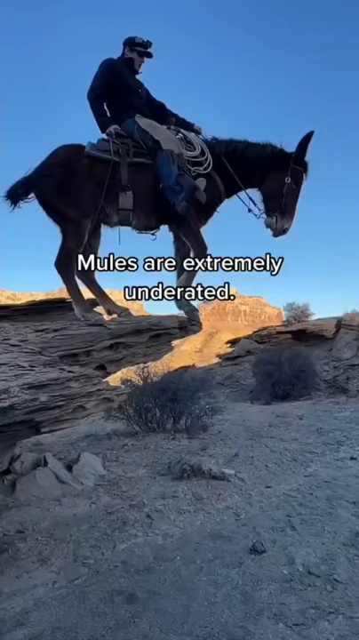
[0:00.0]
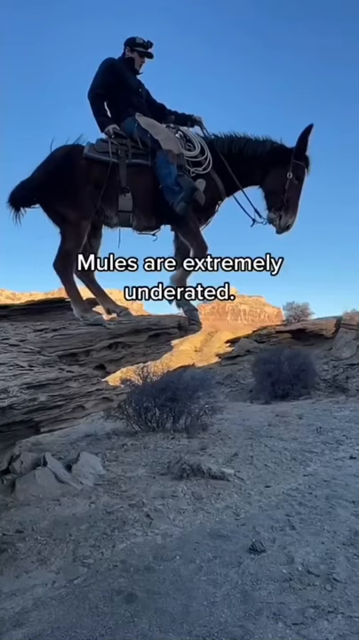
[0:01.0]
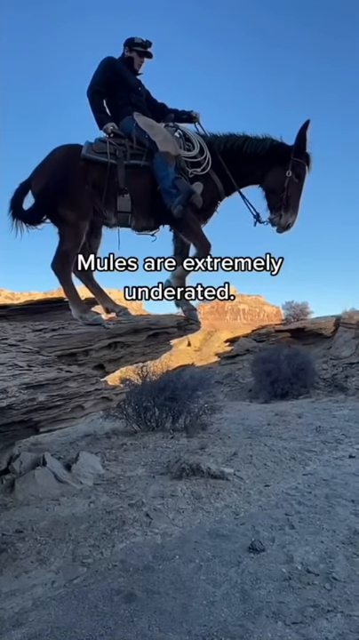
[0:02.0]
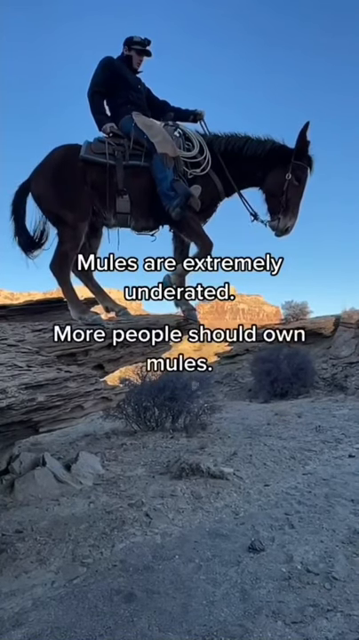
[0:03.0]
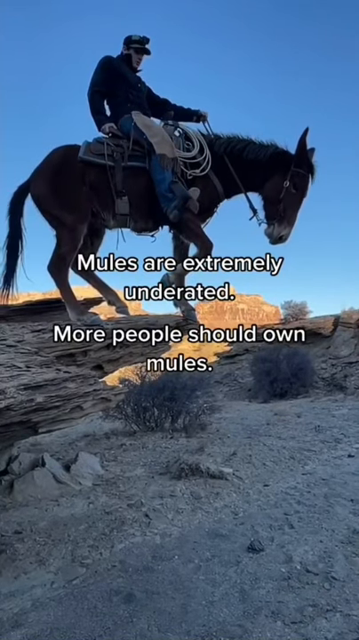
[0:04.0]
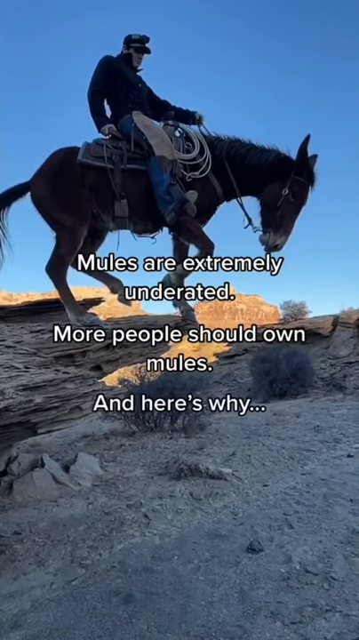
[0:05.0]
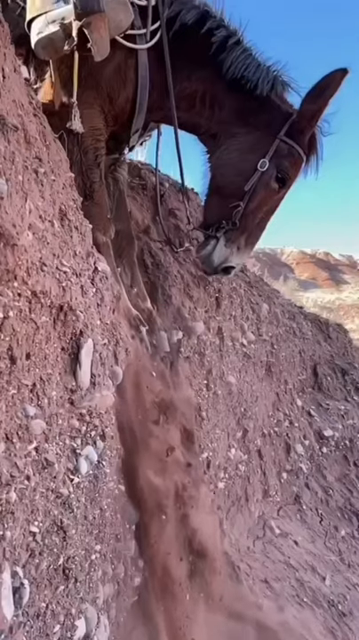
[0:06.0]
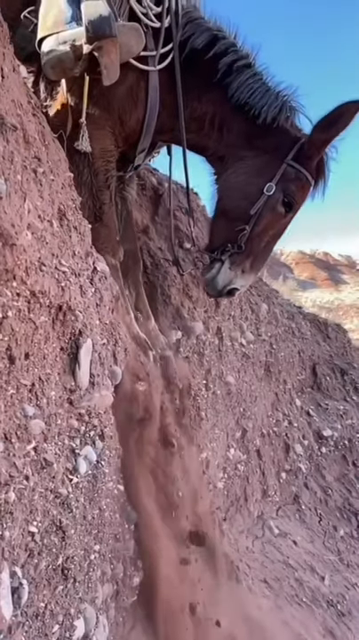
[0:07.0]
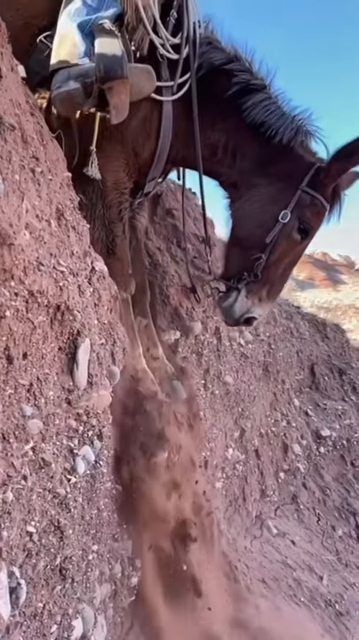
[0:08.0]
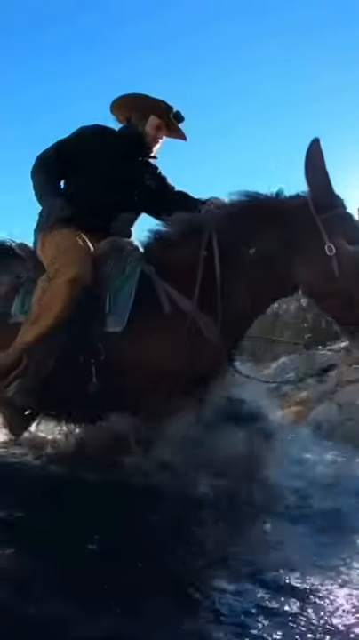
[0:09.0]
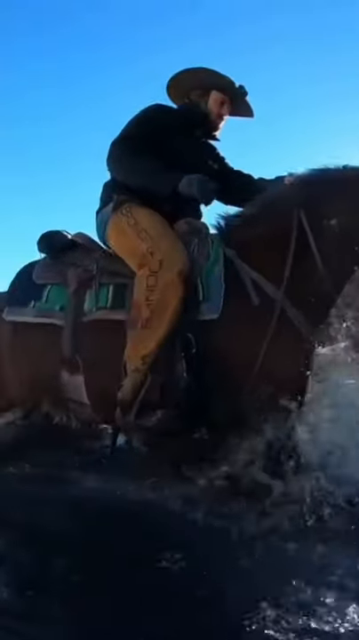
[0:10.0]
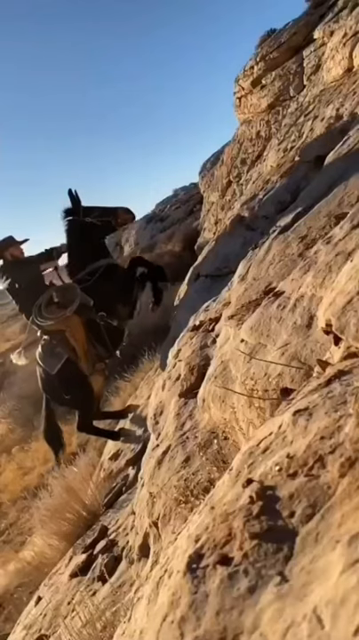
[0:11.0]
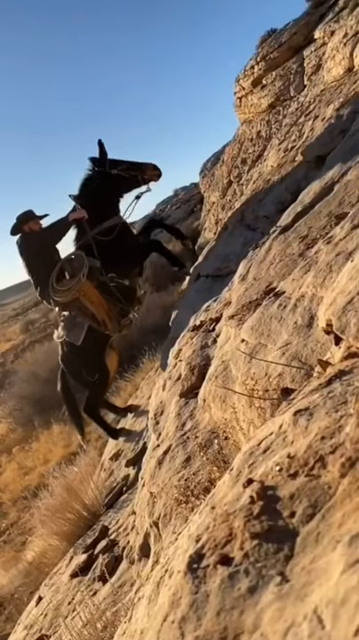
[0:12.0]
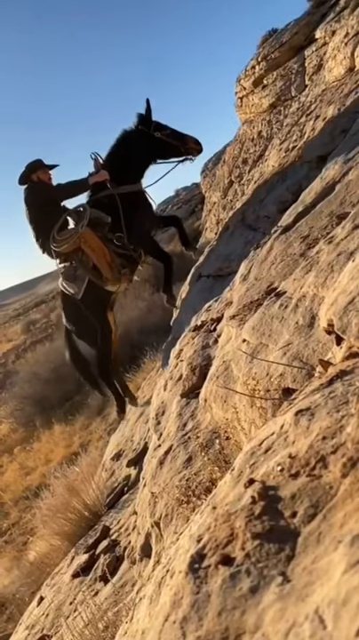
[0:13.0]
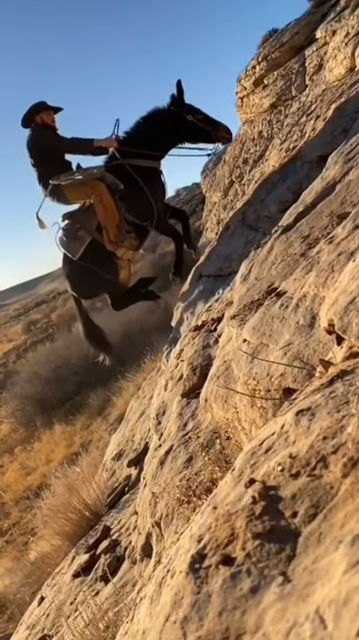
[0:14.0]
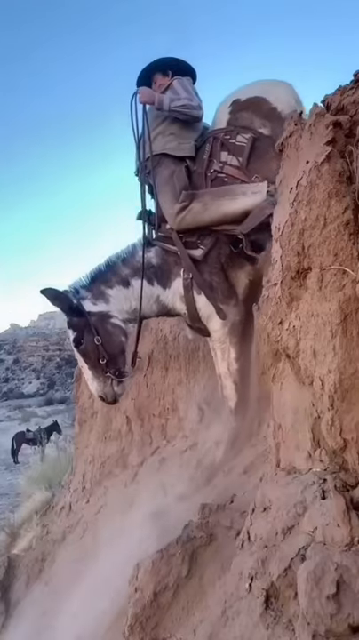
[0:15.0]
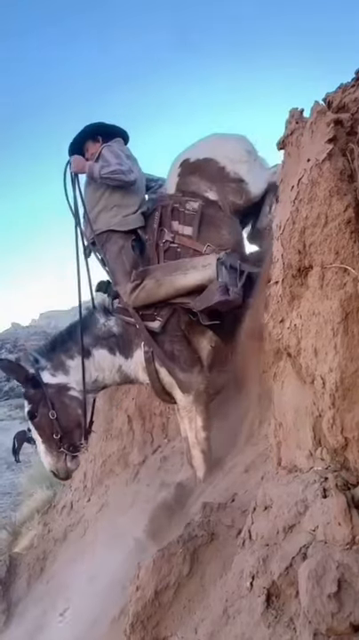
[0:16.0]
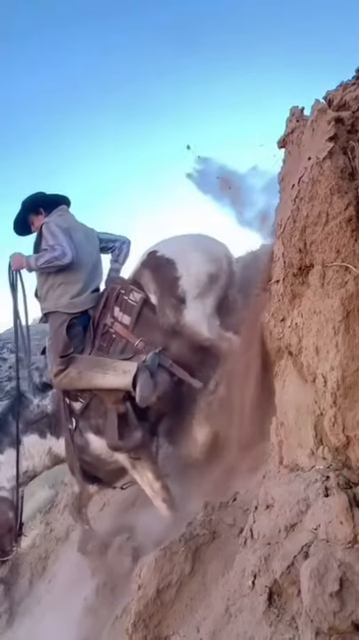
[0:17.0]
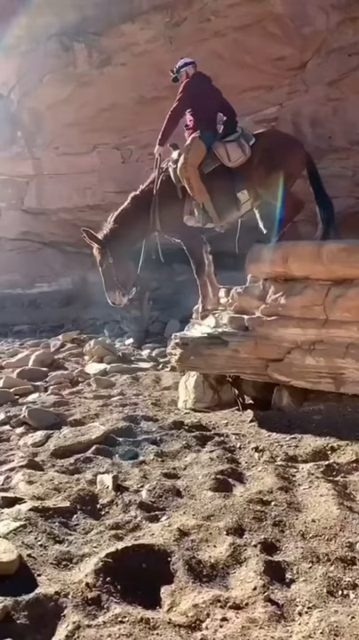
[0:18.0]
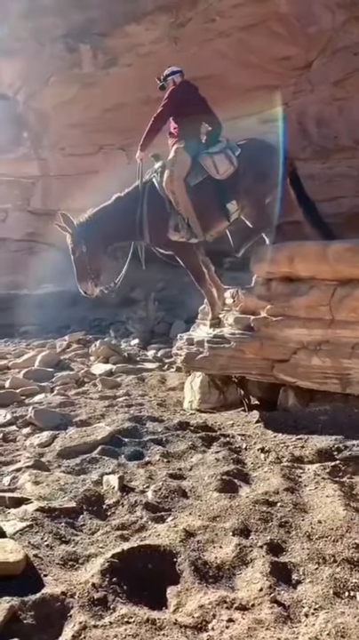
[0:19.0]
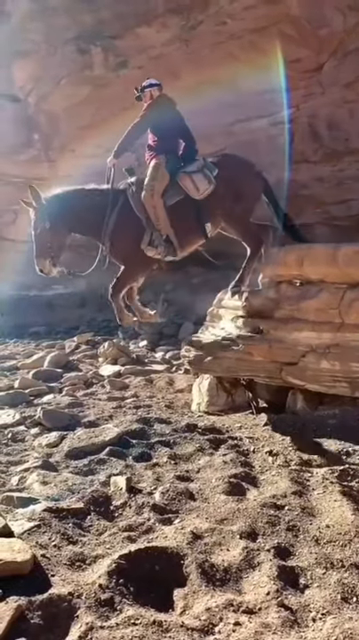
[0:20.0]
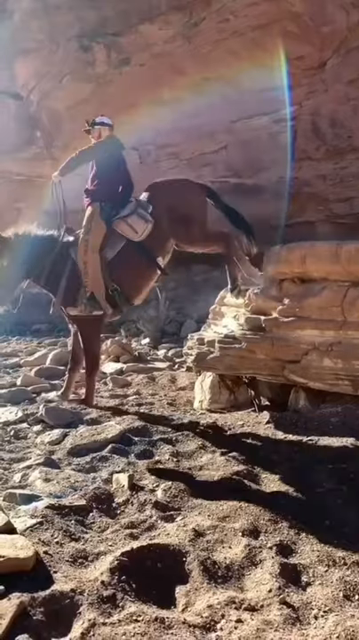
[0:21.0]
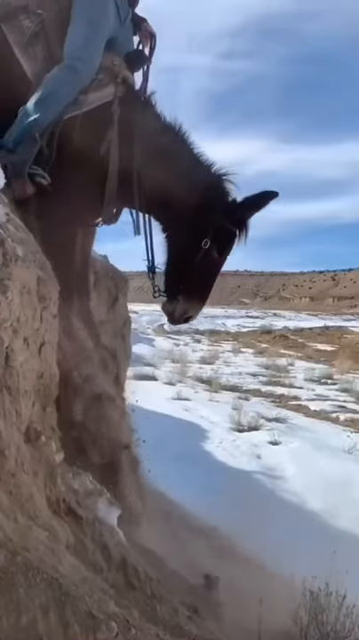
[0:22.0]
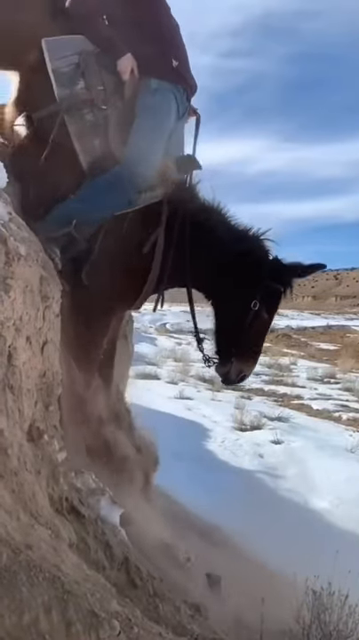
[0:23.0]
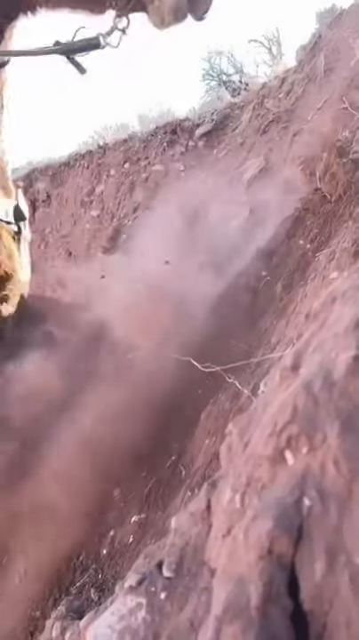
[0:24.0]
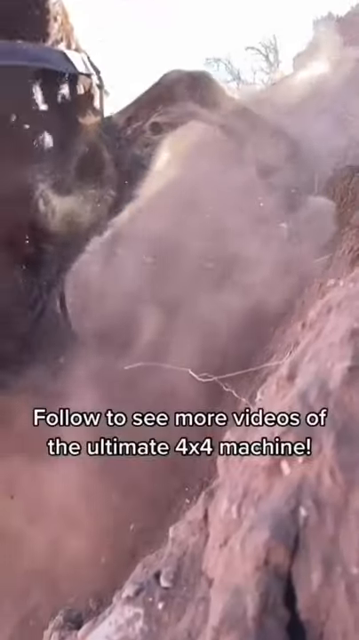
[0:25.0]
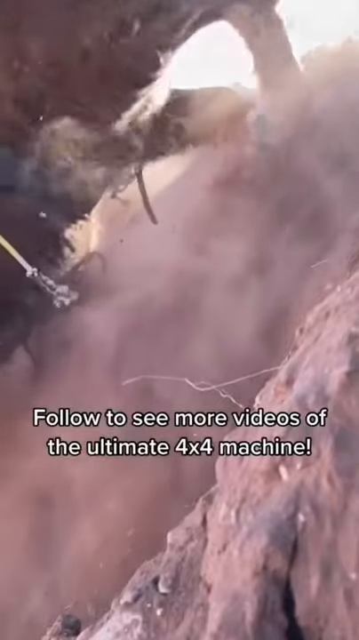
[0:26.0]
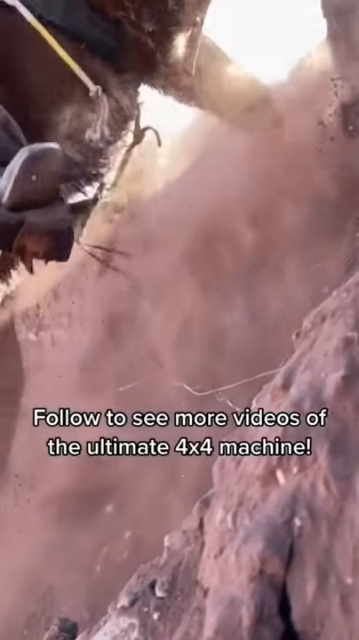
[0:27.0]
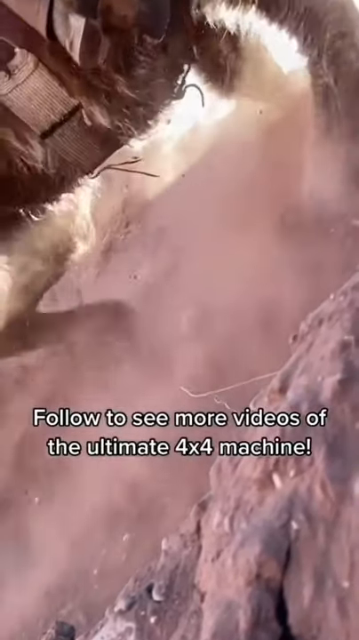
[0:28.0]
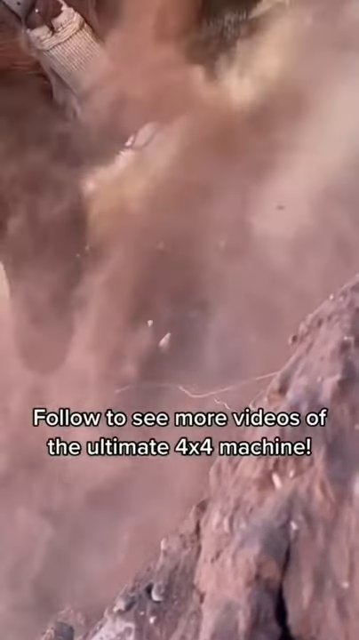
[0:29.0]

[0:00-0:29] A man who looks like a farmer rides a mule out west; the environment seems to suggest somewhere in the western United States, such as Nevada, Arizona, California or Idaho. There are a couple of shots of different kinds of mules, apparently with different types of cowboys. The mules climb the sides of rocky mountains and rocky hills and go into waters that look harder for a person to get through alone.